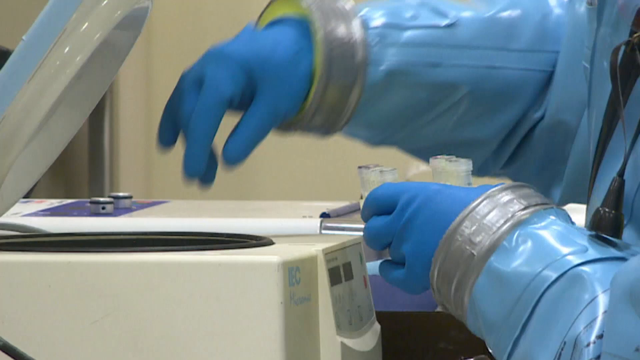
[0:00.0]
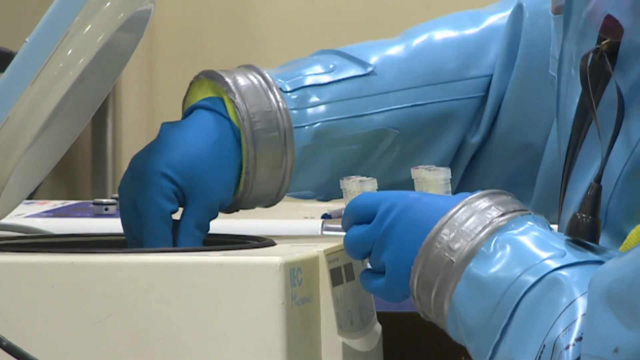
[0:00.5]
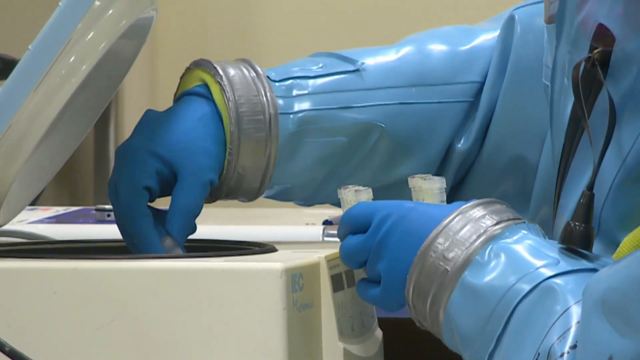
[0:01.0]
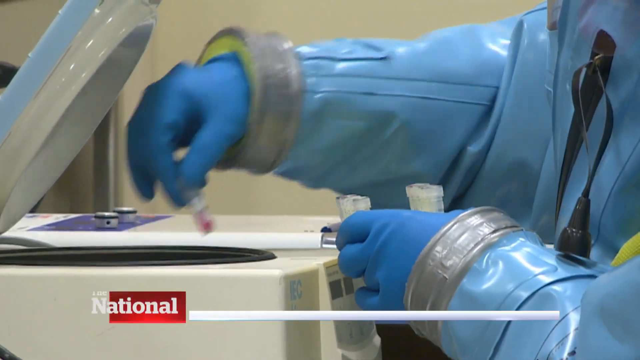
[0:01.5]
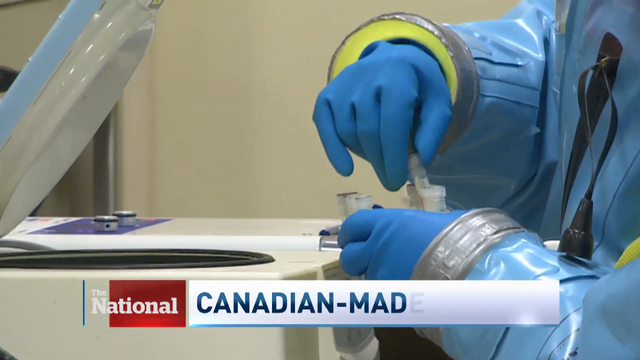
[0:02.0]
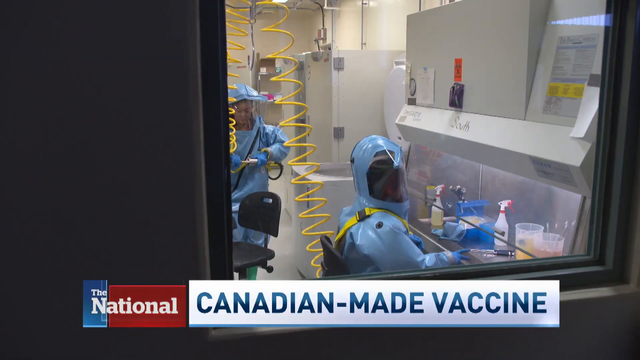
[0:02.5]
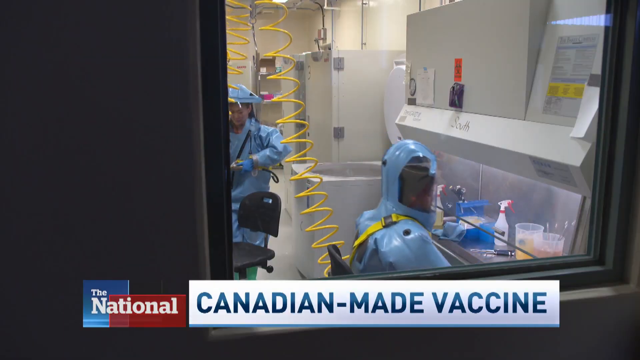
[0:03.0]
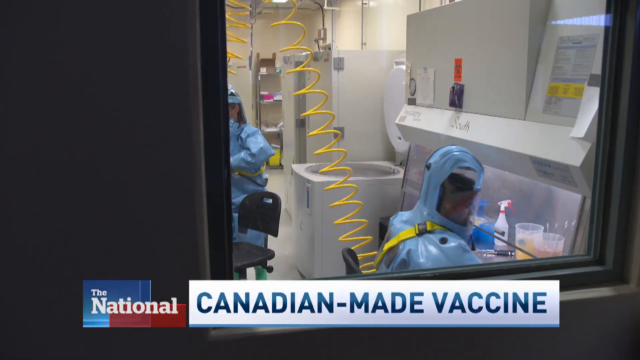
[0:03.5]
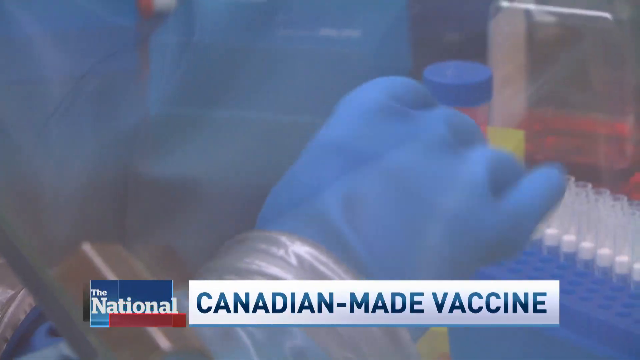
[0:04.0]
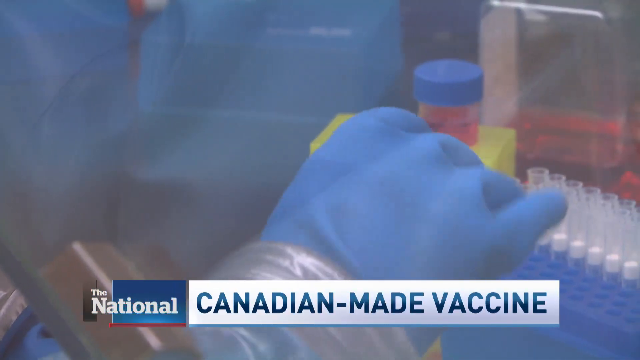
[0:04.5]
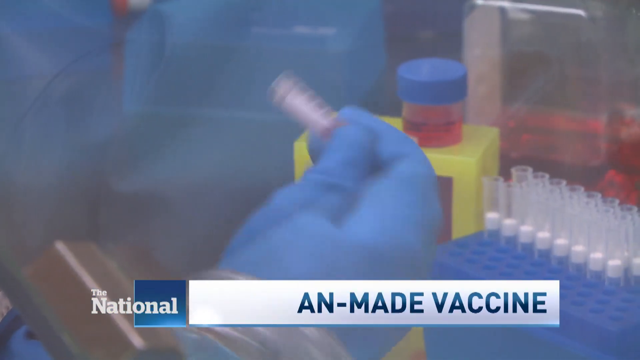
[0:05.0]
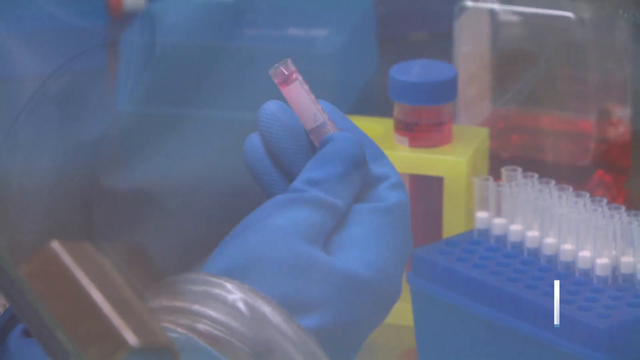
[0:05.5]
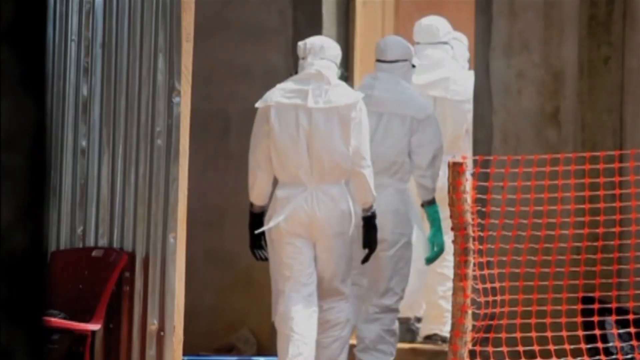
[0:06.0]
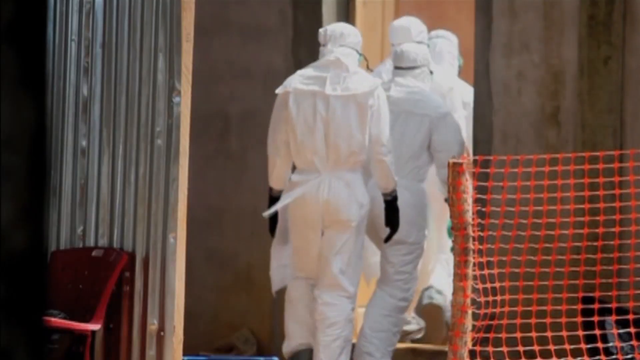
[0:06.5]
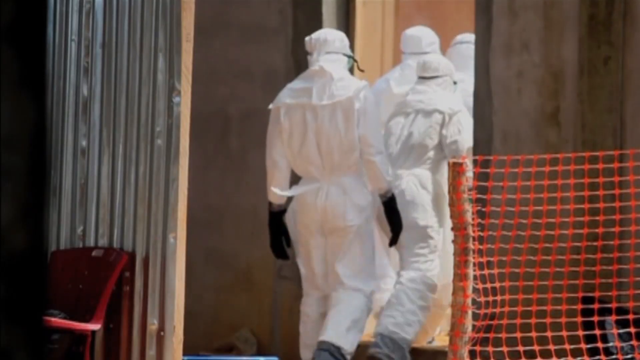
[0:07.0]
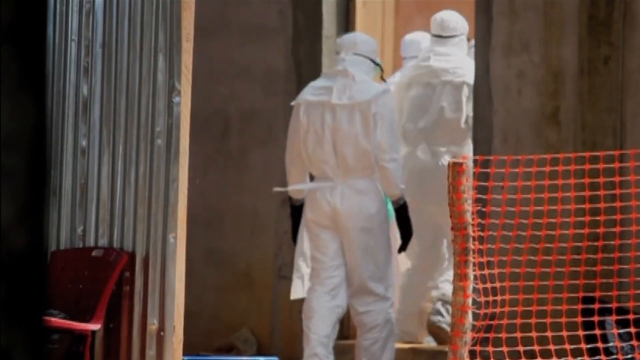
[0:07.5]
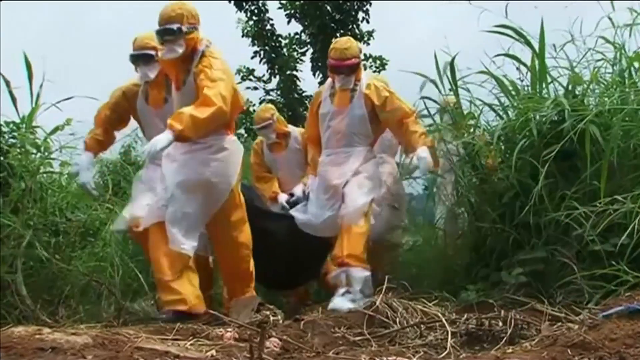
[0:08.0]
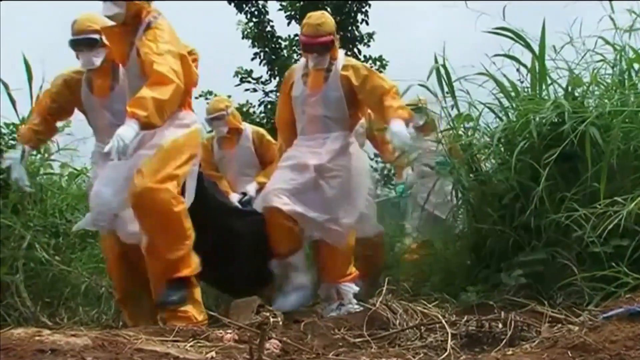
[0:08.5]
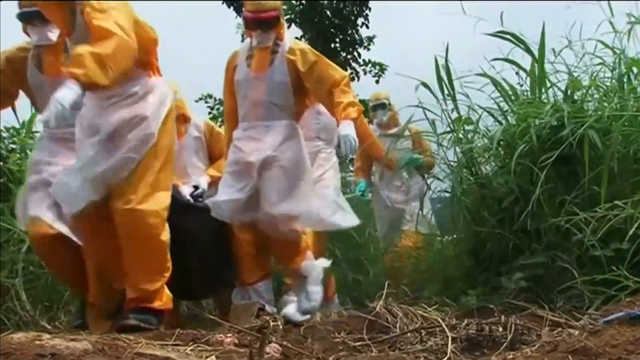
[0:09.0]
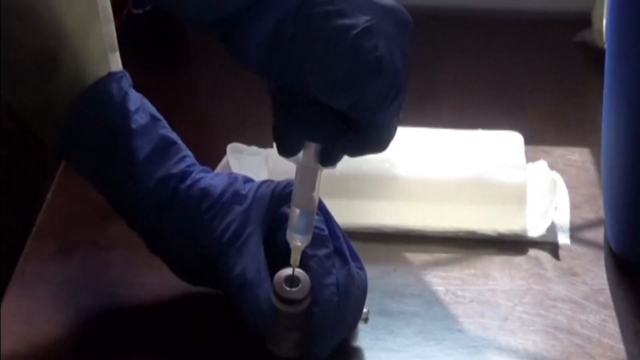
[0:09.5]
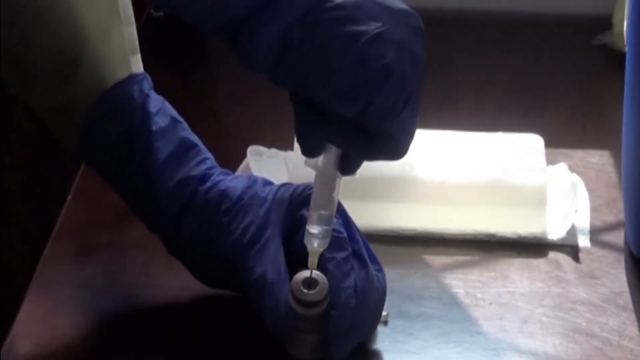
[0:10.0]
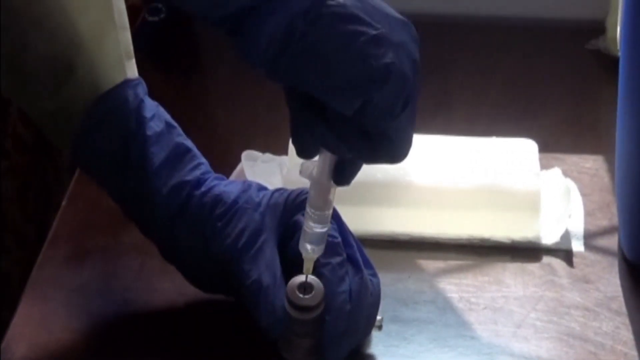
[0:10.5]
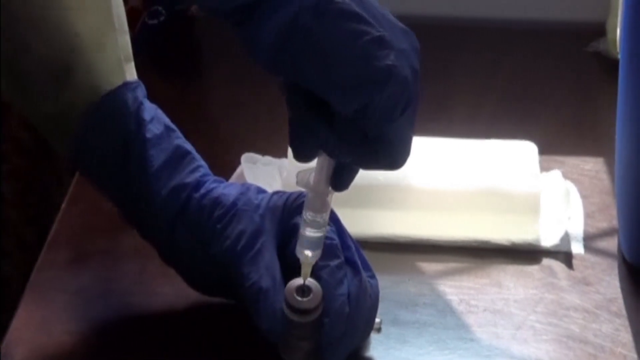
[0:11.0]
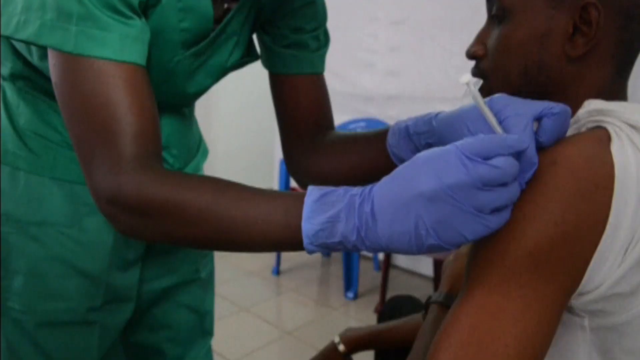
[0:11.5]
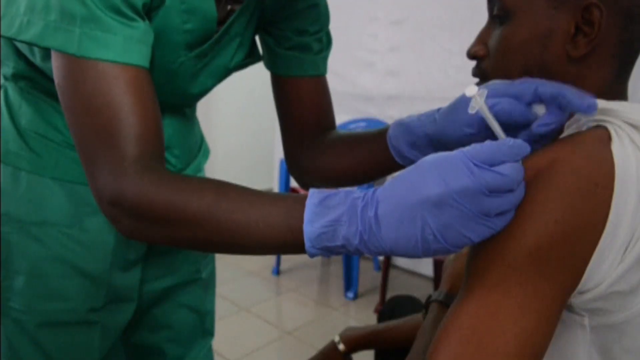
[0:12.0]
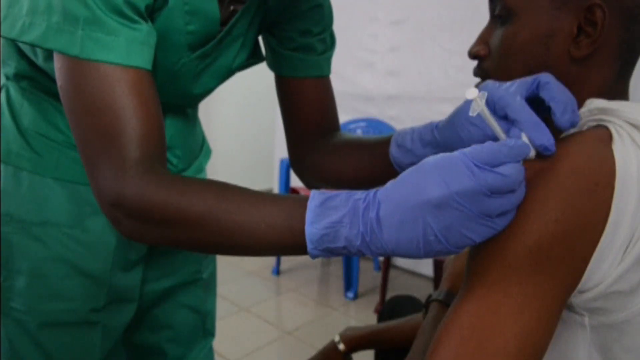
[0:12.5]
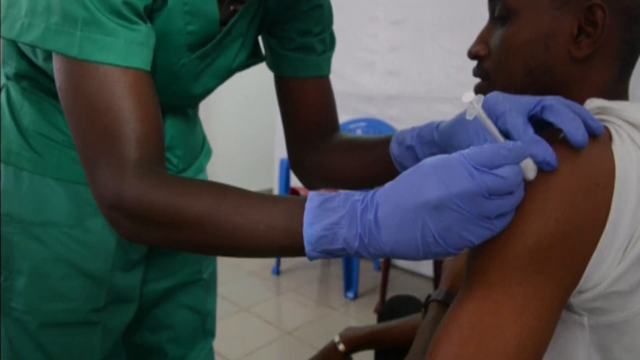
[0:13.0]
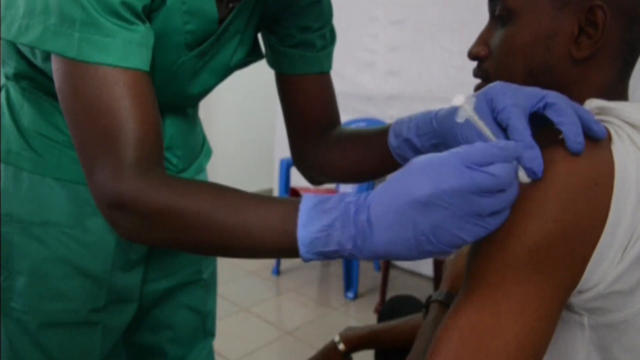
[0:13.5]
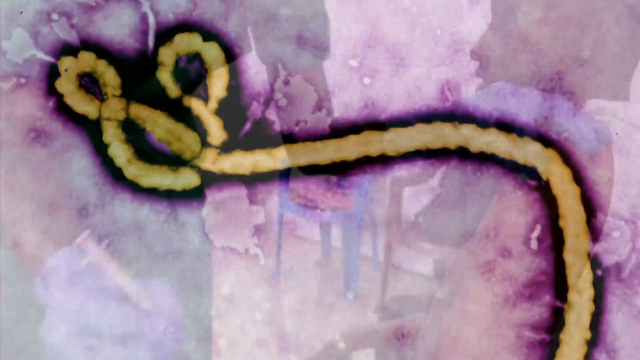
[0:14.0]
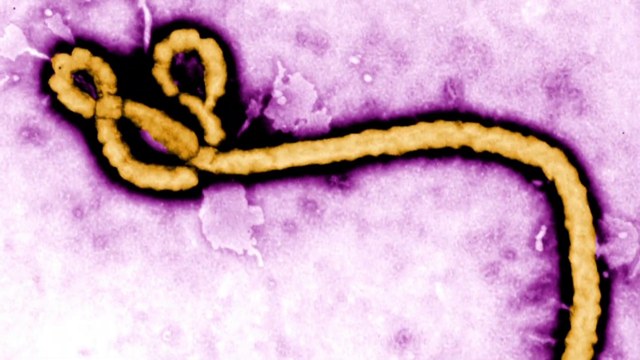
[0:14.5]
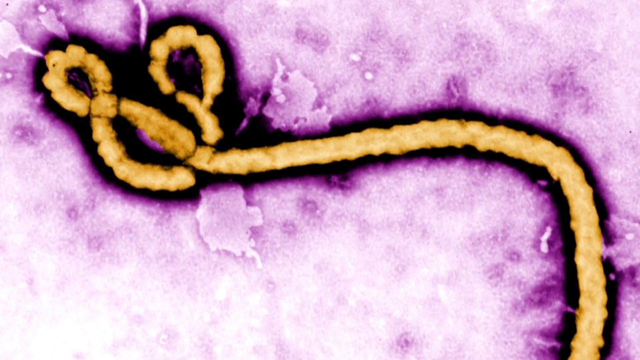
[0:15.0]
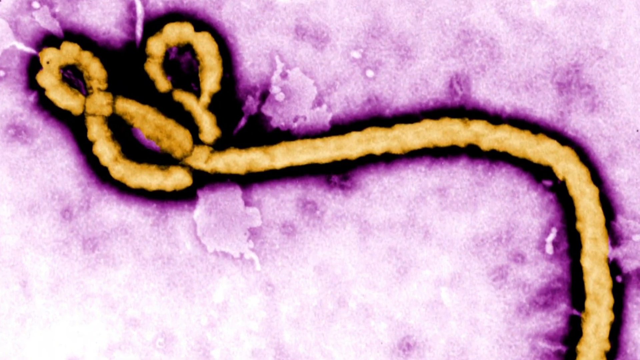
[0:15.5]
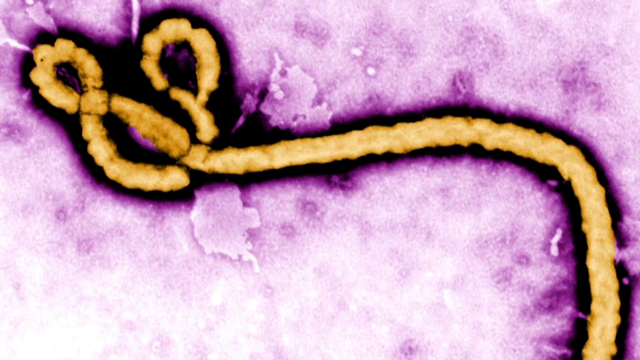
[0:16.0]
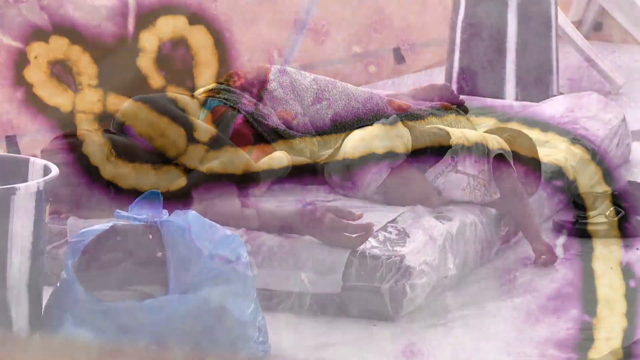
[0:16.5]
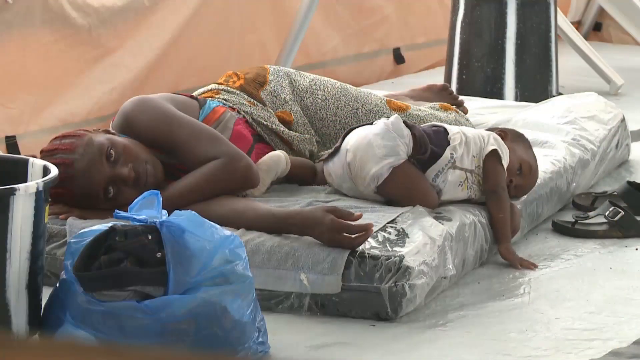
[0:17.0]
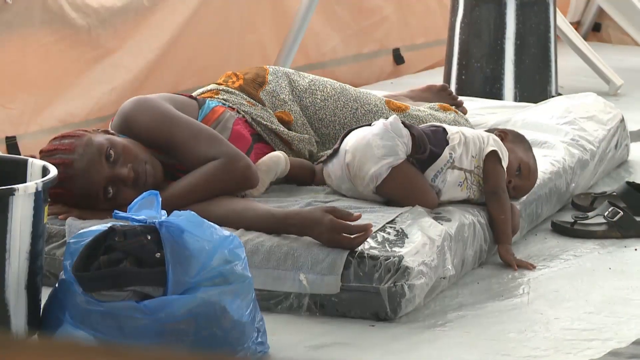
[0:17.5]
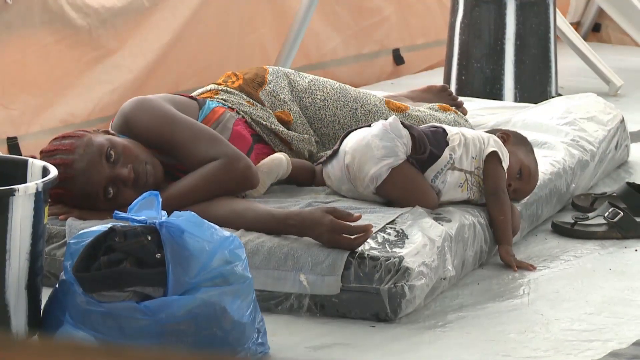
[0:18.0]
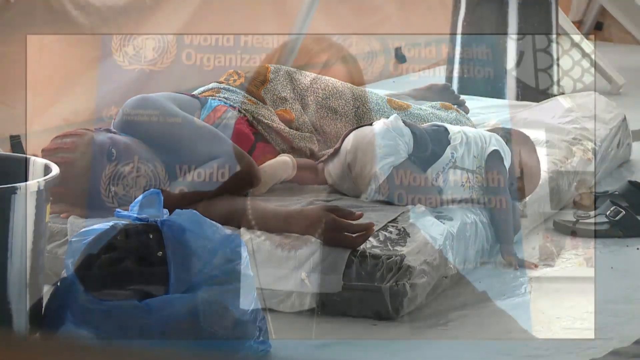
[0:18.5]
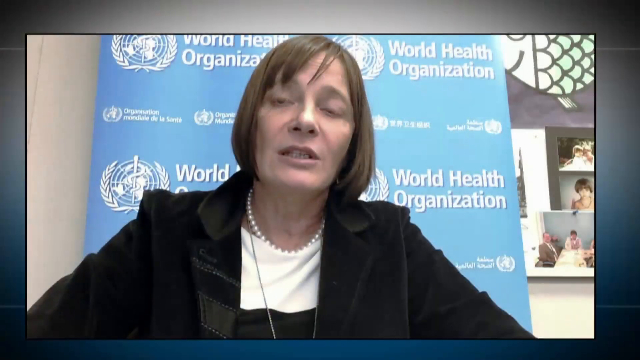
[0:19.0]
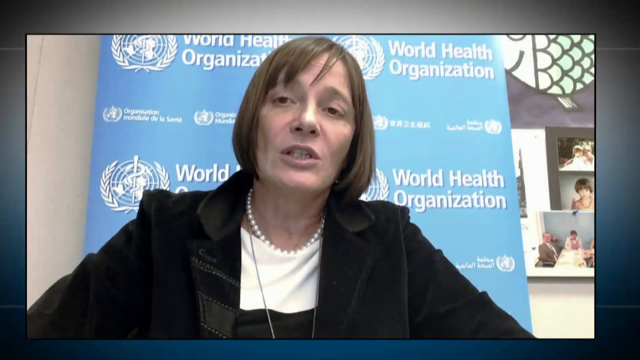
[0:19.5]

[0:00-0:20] A person dressed in some sort of hazmat apparel and wearing gloves appears to put a hand into some sort of machine with a lid and seems to pull something out of it. A different view follows of people in suits in a room that looks very sterile. At the bottom of the screen the text reads "The National," with "Canadian made vaccine" beside it. Hands shake a vial of some sort of pink liquid. Next, people in white hazmat clothing with gloves on their hands appear to walk into some sort of building. What seem to be several different views of people in hazmat uniforms follow, and a woman gives a man a shot in his arm. What looks like a picture of a virus appears on the screen, and then a woman is lying with a baby on a bed.